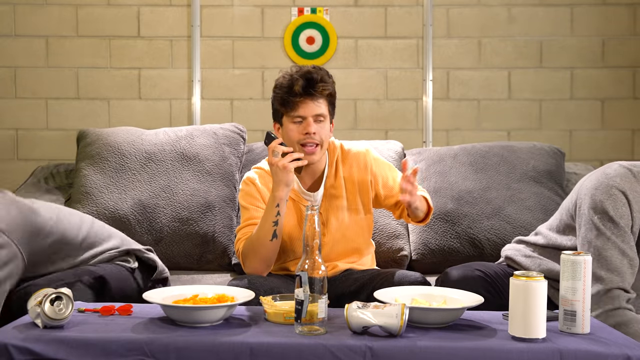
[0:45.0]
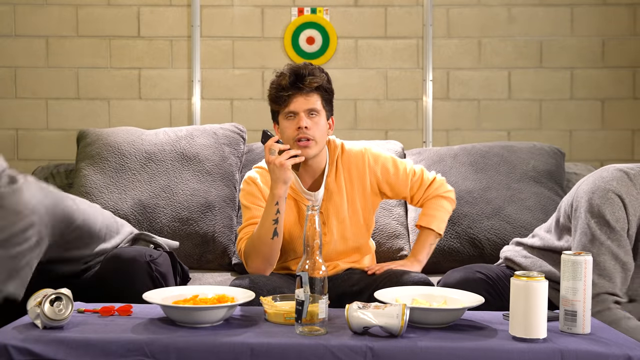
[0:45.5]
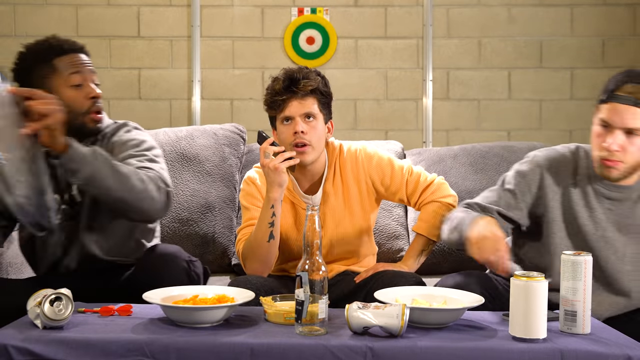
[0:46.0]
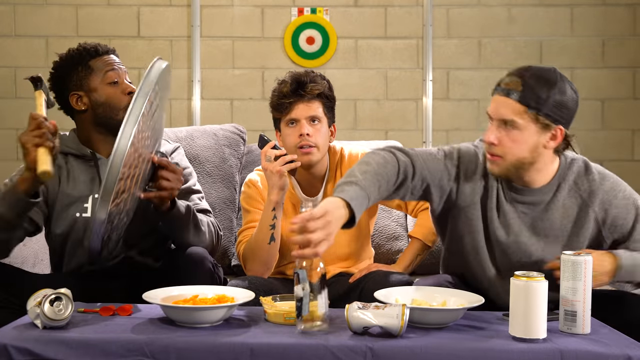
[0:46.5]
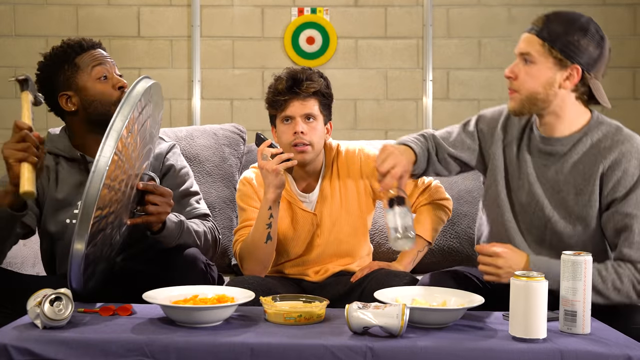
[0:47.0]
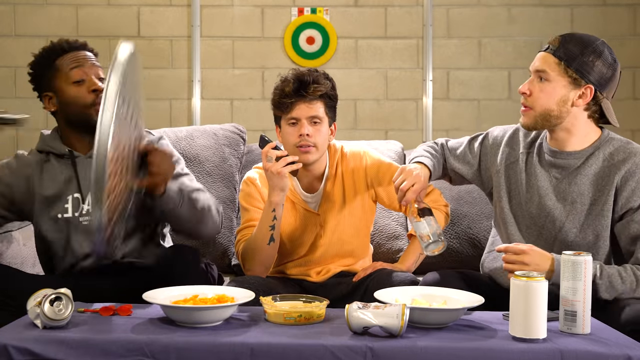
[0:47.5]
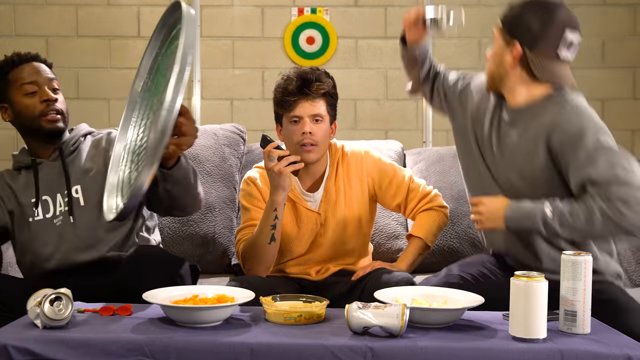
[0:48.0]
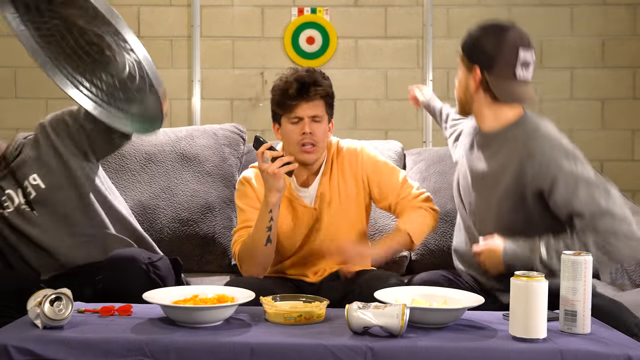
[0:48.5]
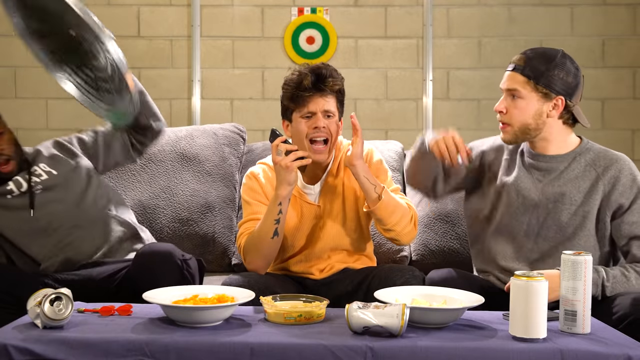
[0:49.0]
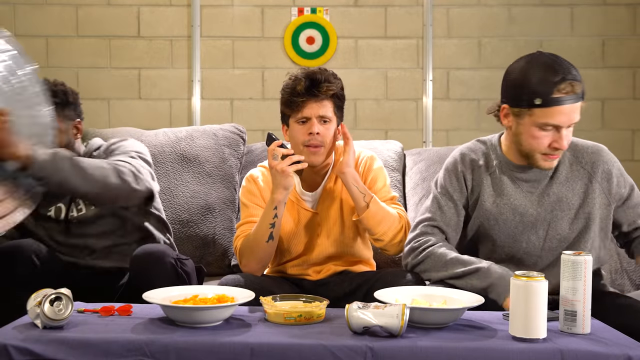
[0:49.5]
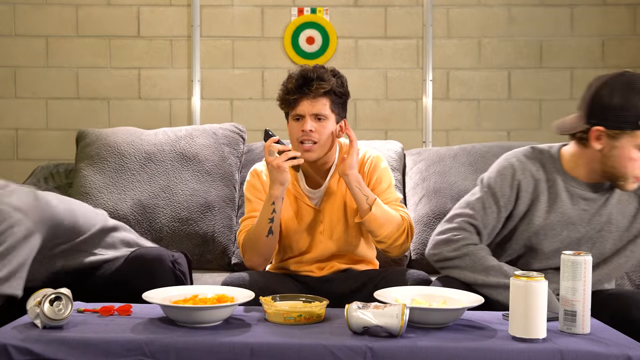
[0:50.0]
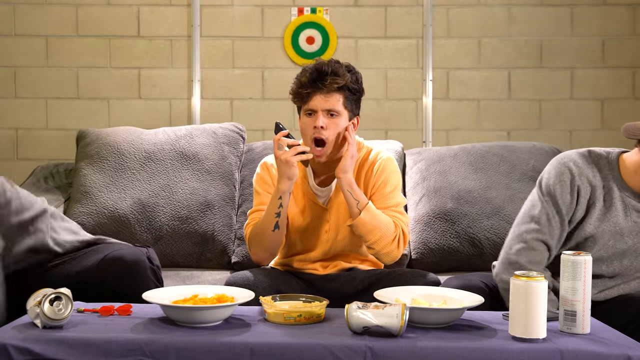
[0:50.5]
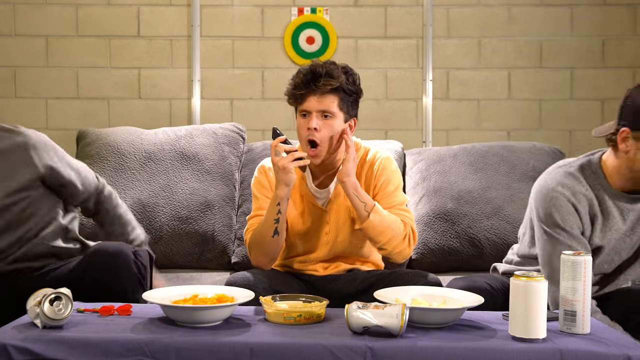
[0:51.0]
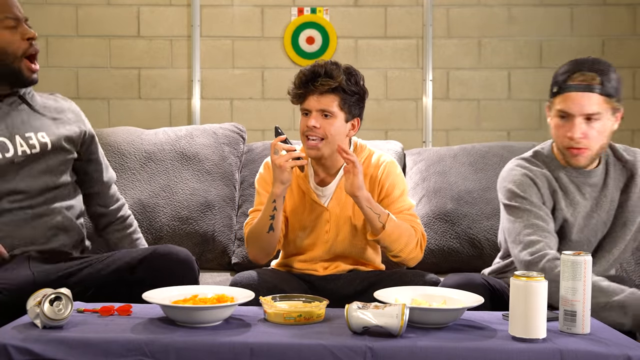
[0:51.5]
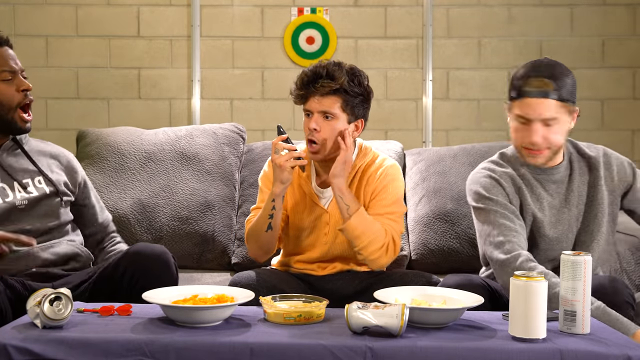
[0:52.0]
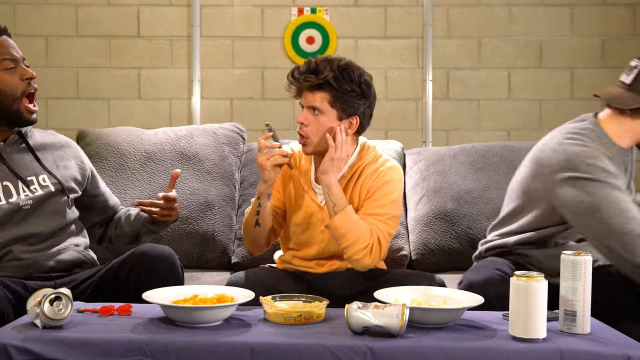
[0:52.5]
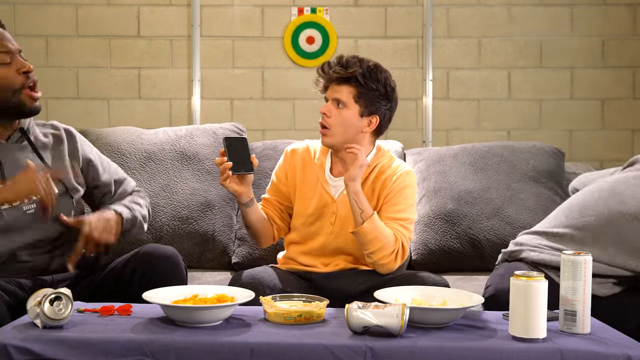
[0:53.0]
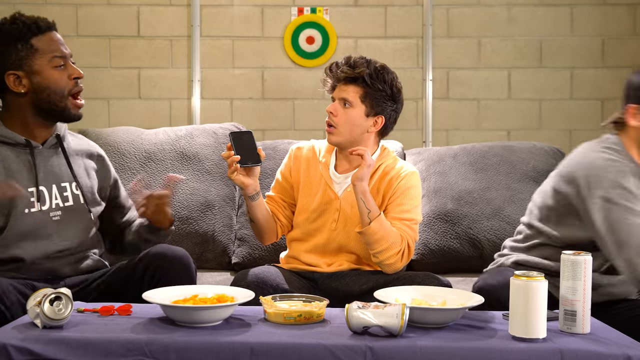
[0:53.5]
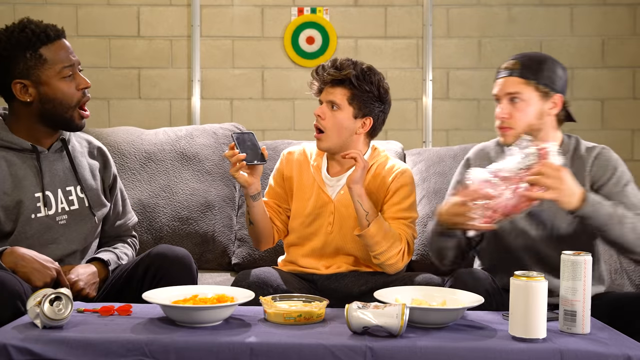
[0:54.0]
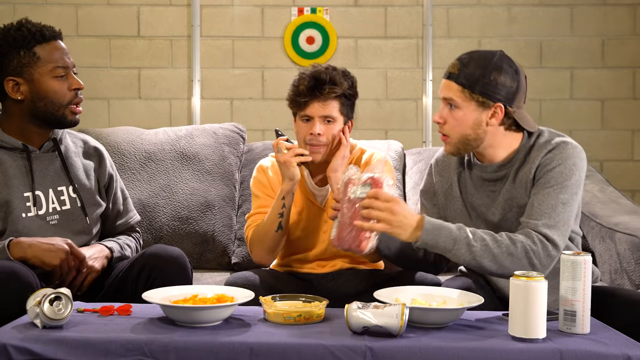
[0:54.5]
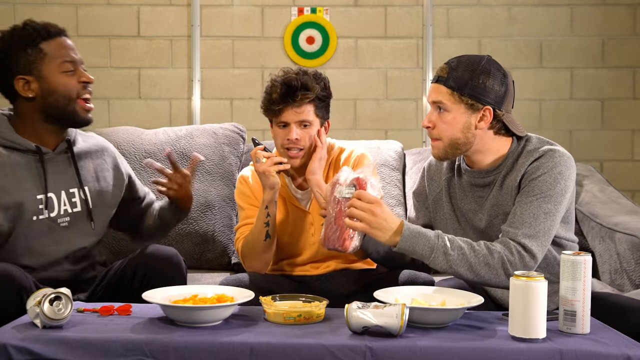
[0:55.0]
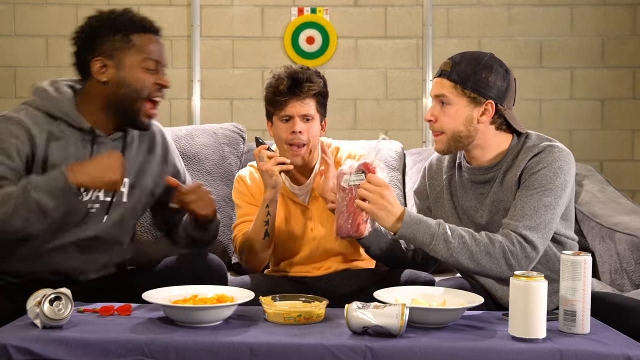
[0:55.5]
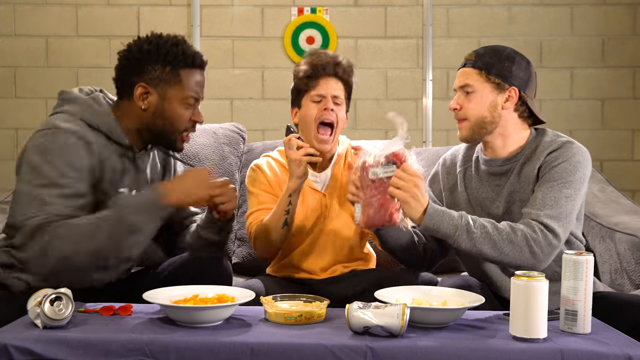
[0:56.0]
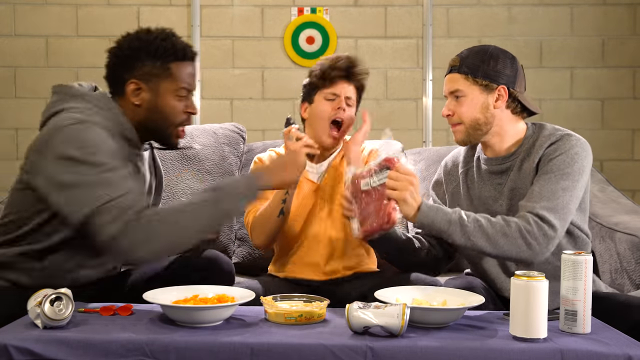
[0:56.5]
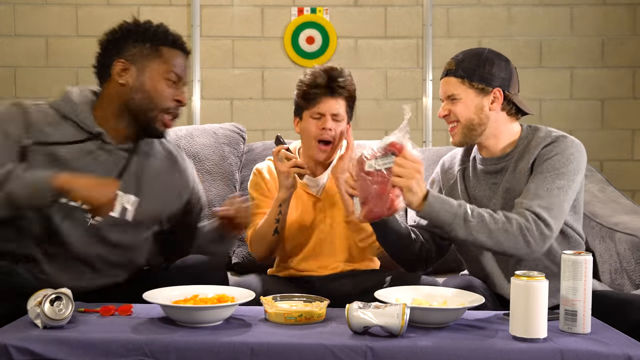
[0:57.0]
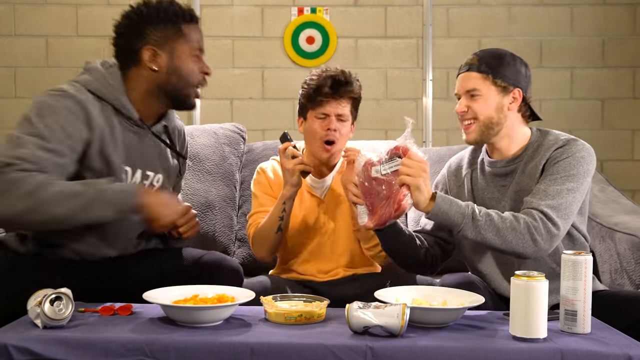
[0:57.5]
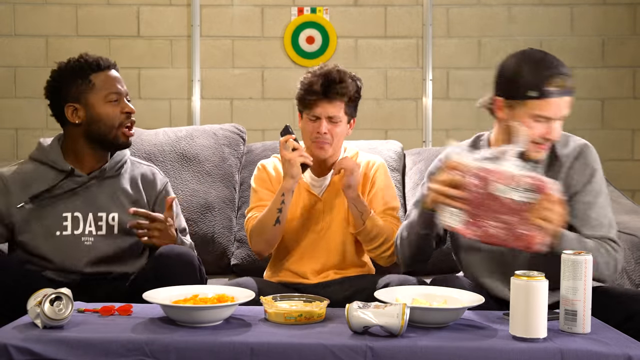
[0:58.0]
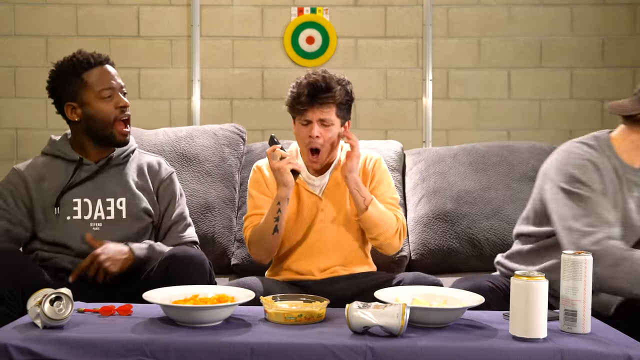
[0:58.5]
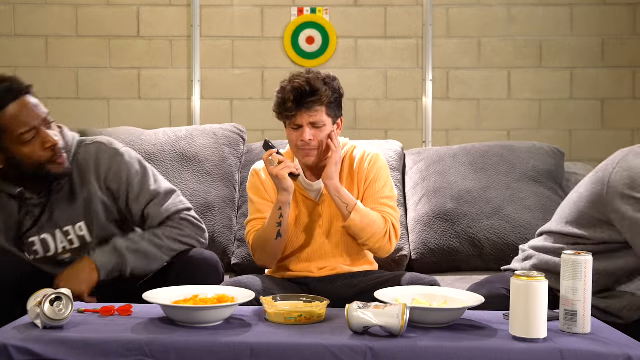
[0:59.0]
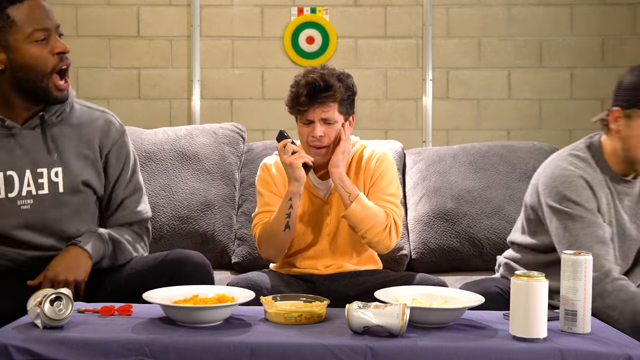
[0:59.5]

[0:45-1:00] The men put down the items they had picked up and pick up new ones. The man in the middle is still talking on the phone and looking at the men next to him. The man on the right puts down his box, leans over, picks up the empty beer bottle from the middle of the table and throws it over the man's head to smash into the wall behind him. As he throws it, the man on the left picks up a hammer and a metal trash can lid and hits the lid, then puts it down on the left-hand side. Next, the man on the right picks up what looks like a package of meat, and the man on the left punches it as the man in the middle keeps talking. When the meat container is punched, the man on the phone looks somewhat annoyed and very surprised, and seems to be talking louder.